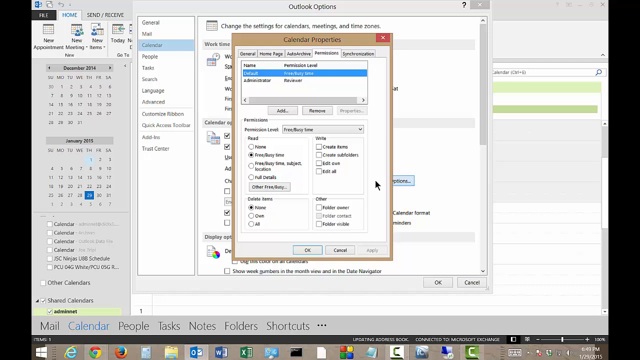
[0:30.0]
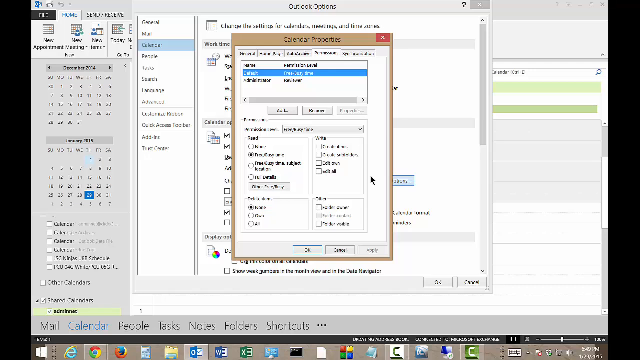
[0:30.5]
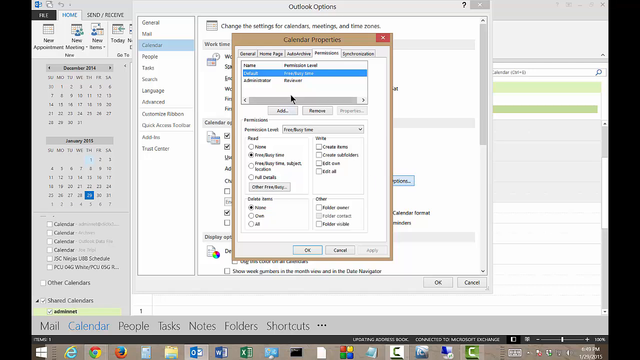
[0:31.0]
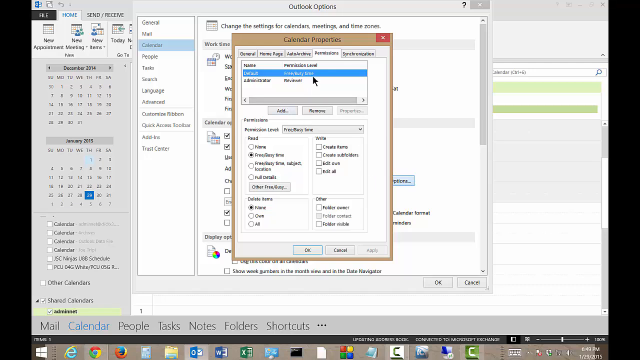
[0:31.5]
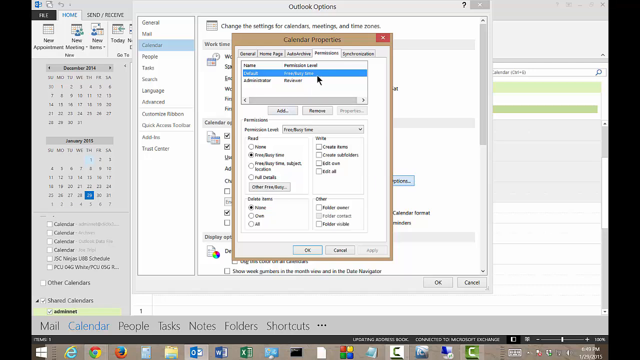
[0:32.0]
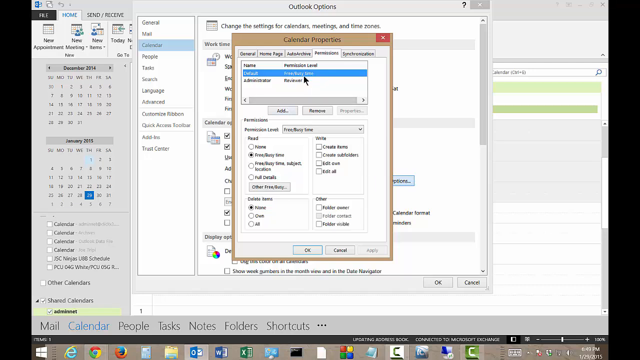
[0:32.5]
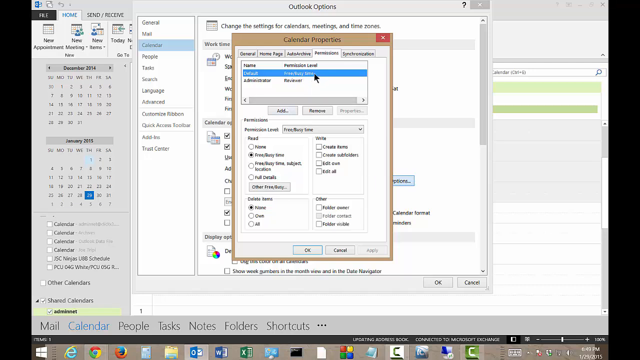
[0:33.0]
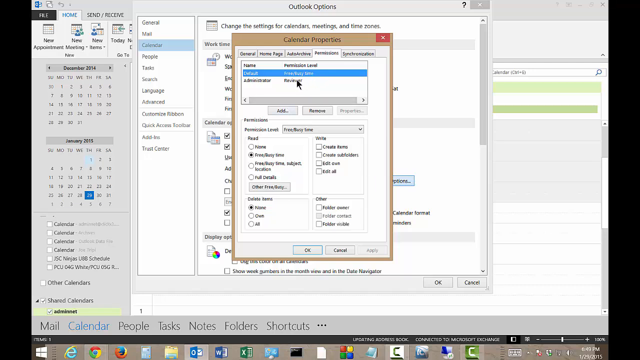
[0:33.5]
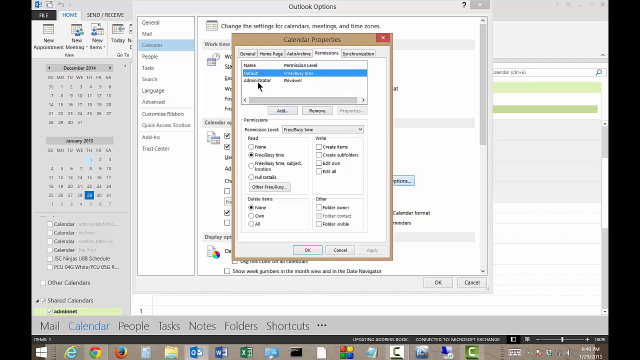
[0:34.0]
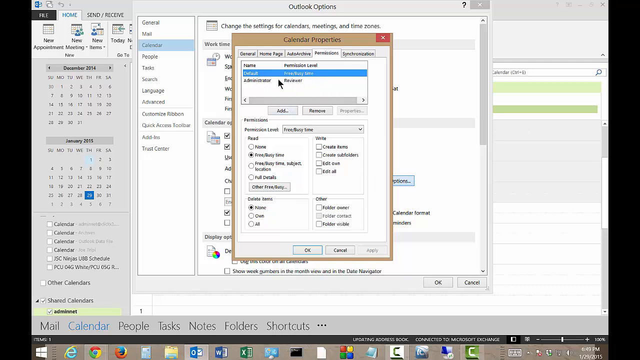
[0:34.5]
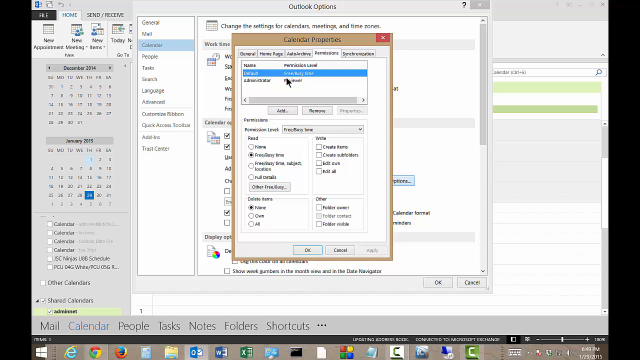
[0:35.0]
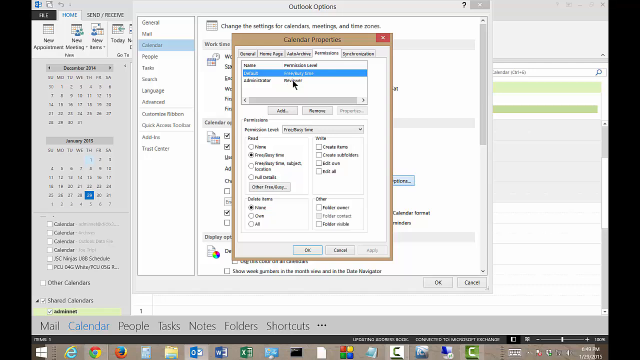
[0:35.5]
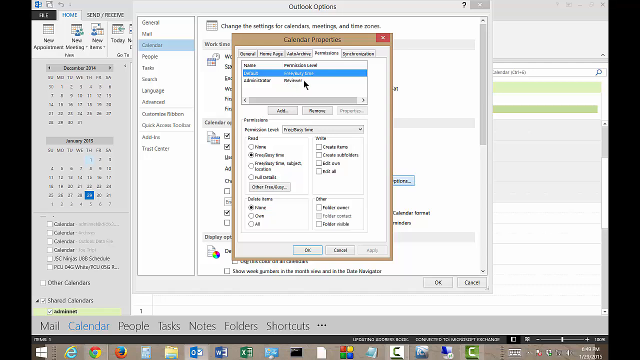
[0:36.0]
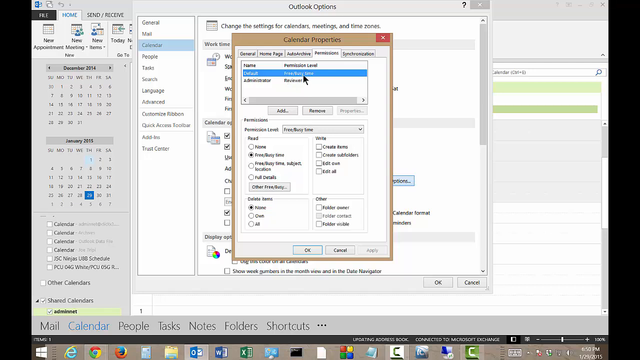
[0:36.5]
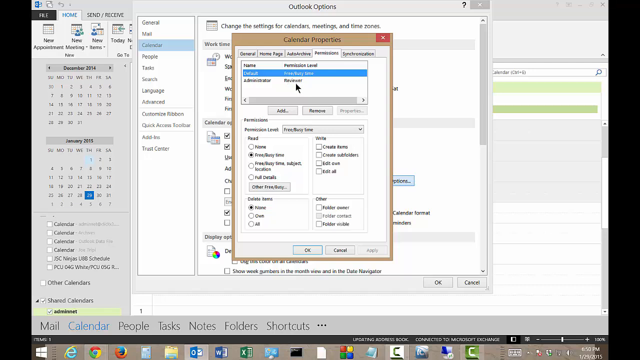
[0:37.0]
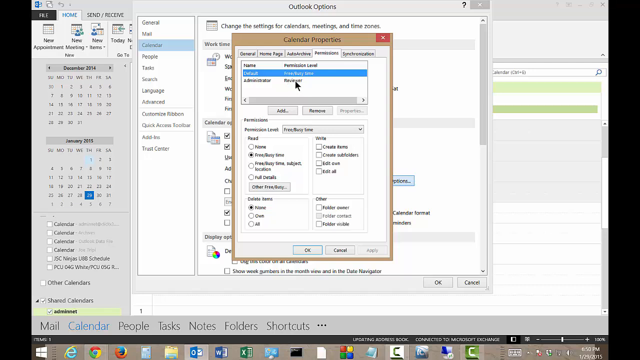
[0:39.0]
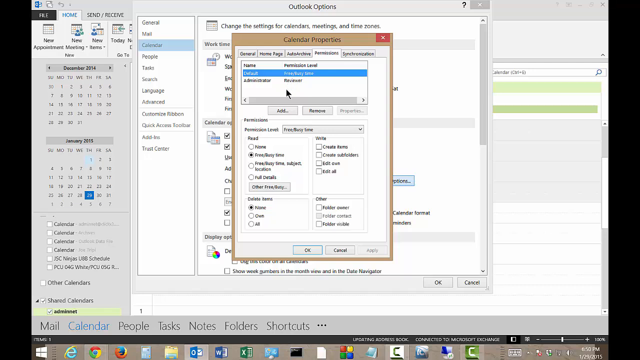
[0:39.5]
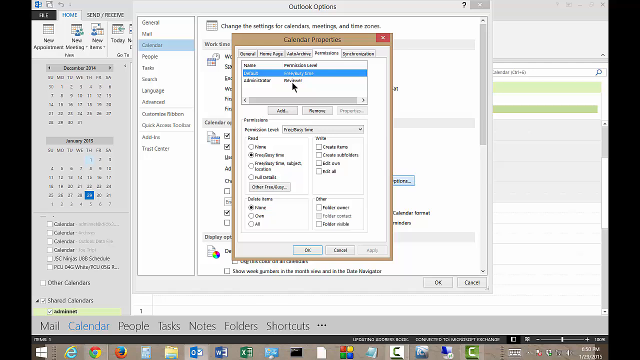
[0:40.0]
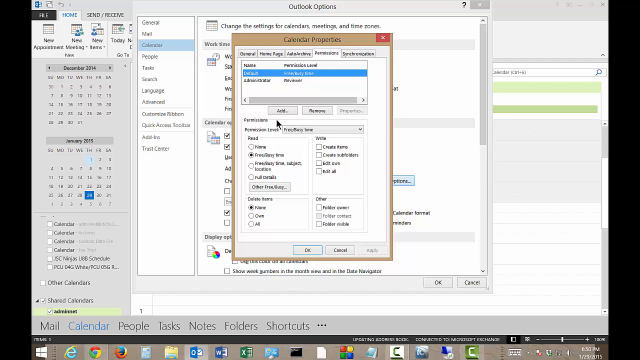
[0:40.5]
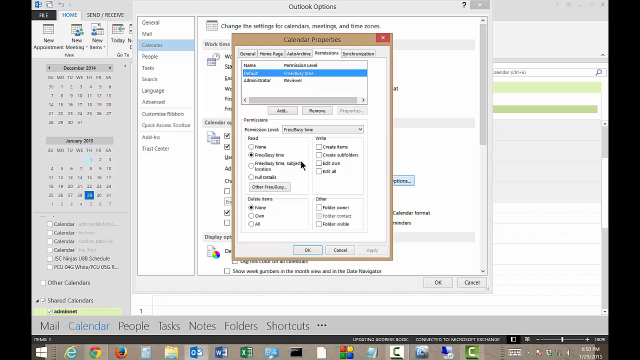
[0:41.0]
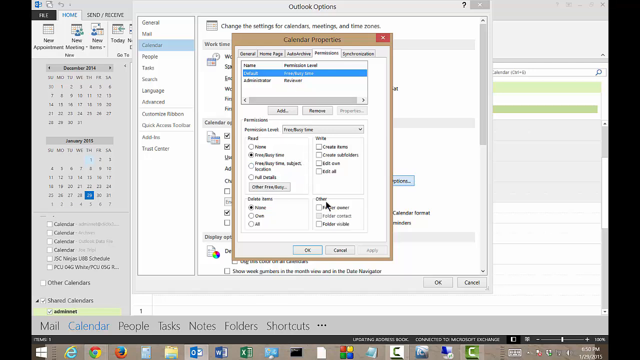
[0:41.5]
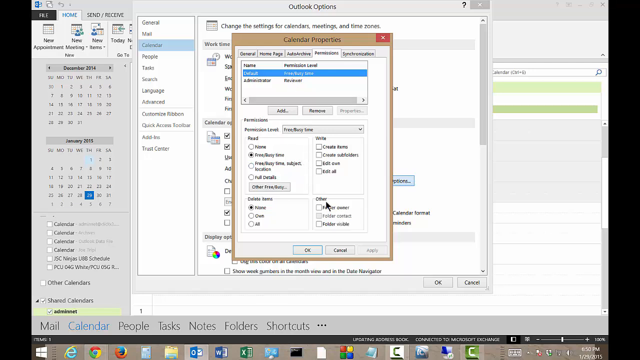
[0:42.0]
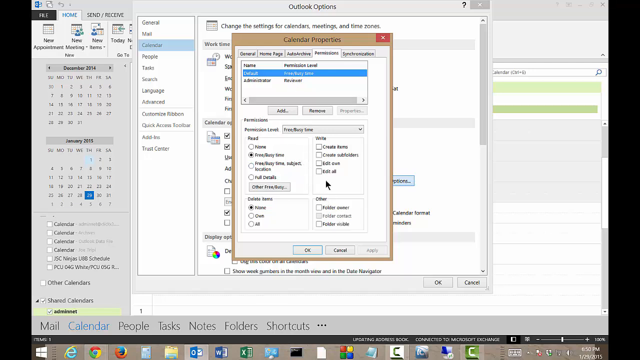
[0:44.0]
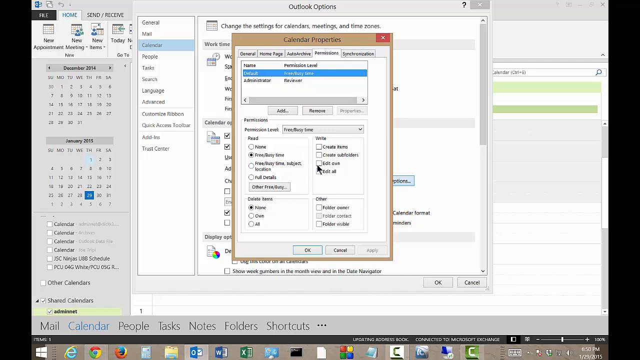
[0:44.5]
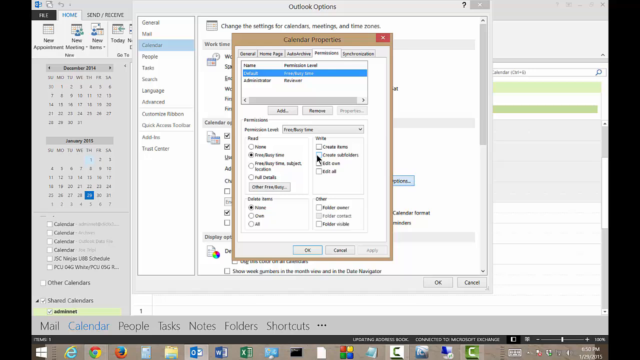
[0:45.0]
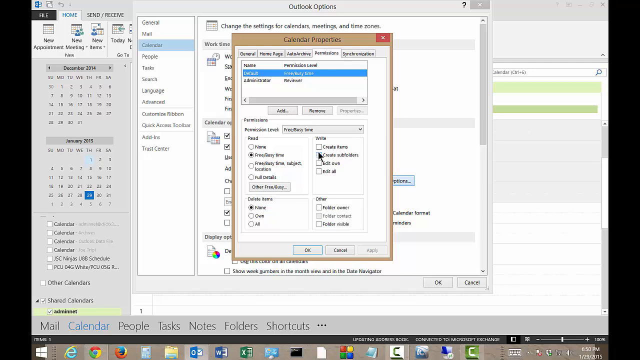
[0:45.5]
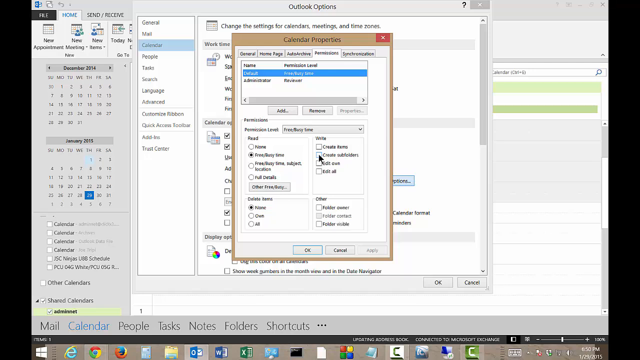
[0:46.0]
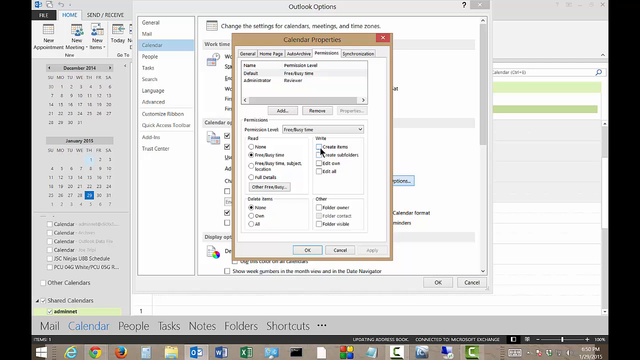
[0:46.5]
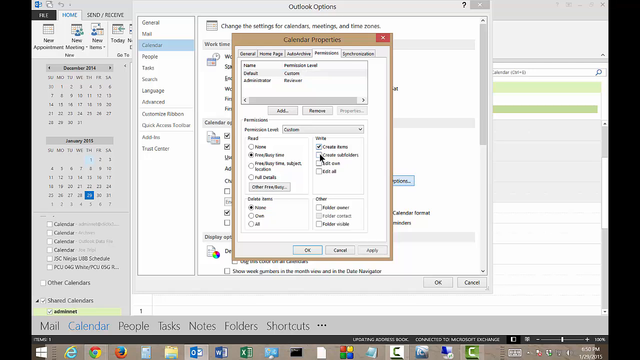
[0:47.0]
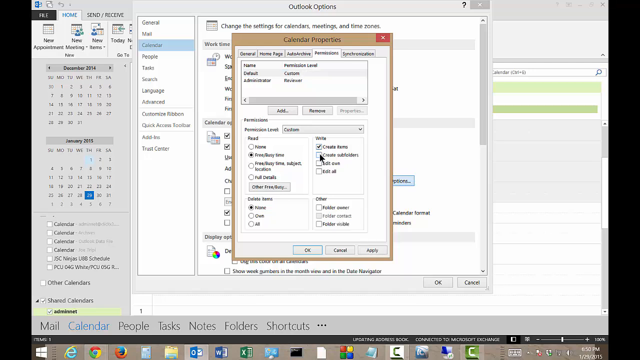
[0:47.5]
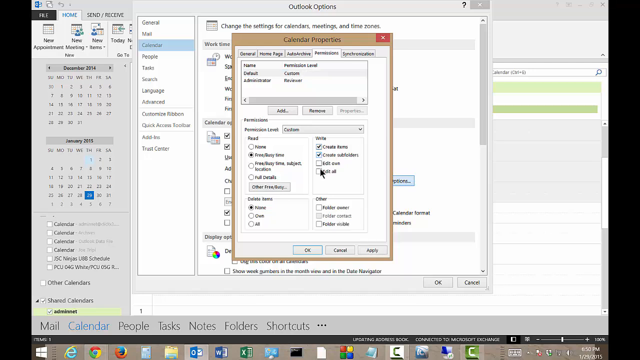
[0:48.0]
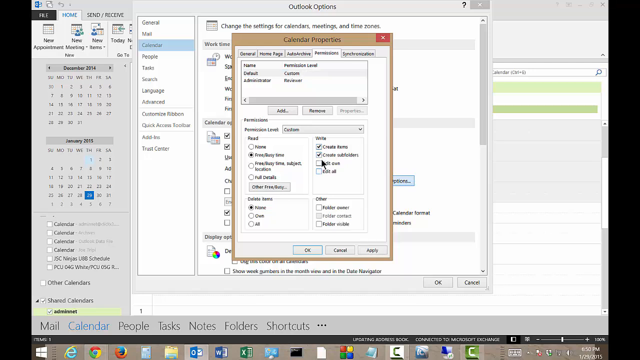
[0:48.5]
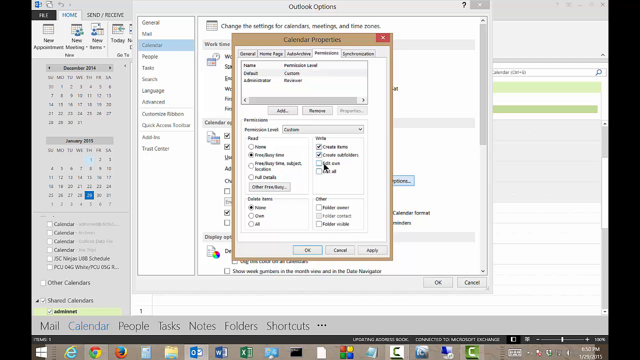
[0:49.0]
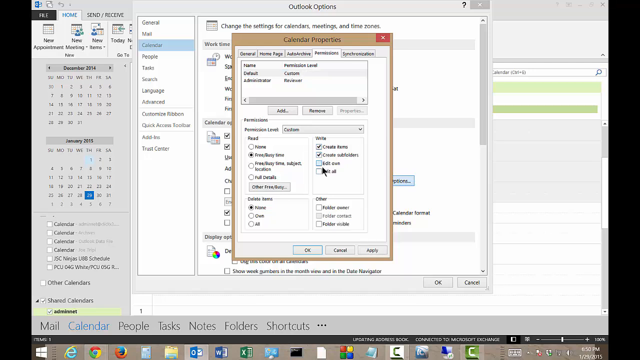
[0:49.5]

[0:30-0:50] In the new window, the user appears to hover over a section reading "default", highlighted in blue, then hovers underneath it over a section reading "administrator" and moves further down the window. There is a tick box that apparently reads "create items", though the pixelation makes this uncertain; the boxes are under a title reading "Right". Other options in the window include "Read", "Other" and "Delete Items". The user ticks "Create Items" and "Create Subfolders". The previous window, titled "Outlook Options", is still visible beneath the new Calendar Properties window, and both windows are above the larger Outlook calendar, where December 2014 and January 2015 appear in a calendar thumbnail view on the left.